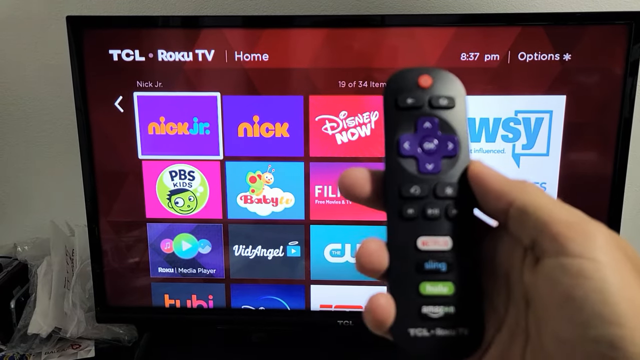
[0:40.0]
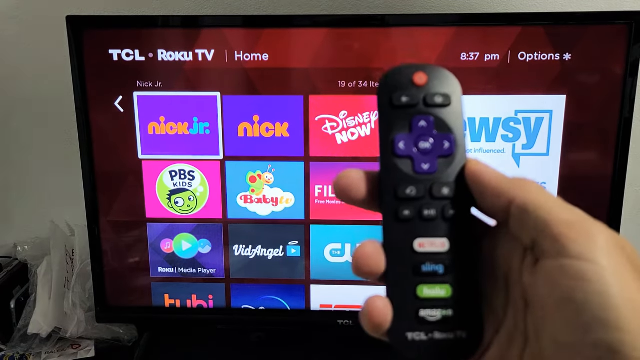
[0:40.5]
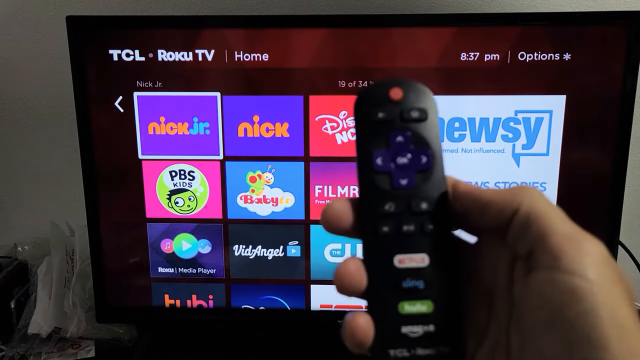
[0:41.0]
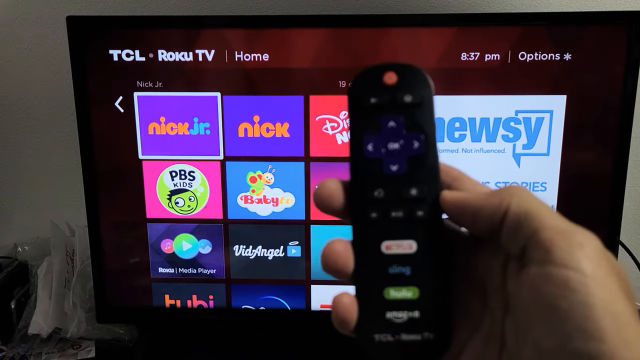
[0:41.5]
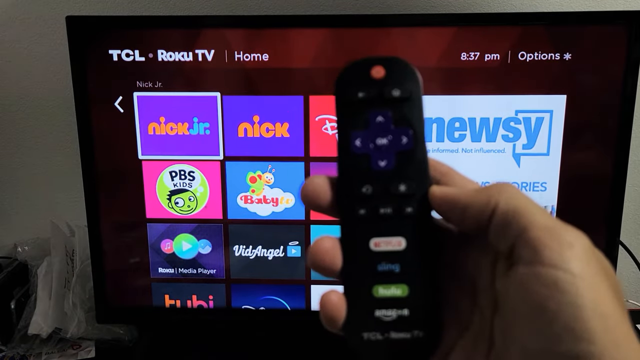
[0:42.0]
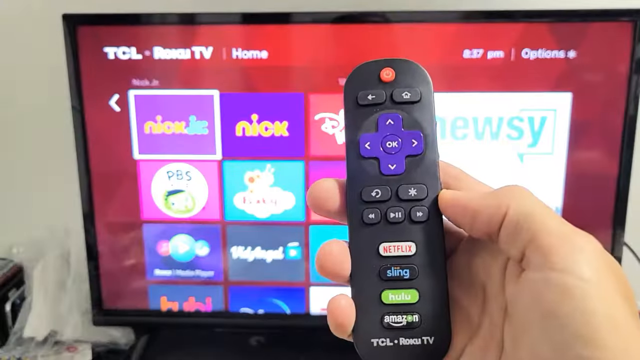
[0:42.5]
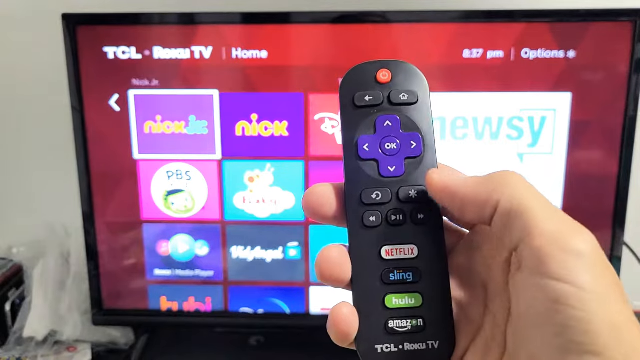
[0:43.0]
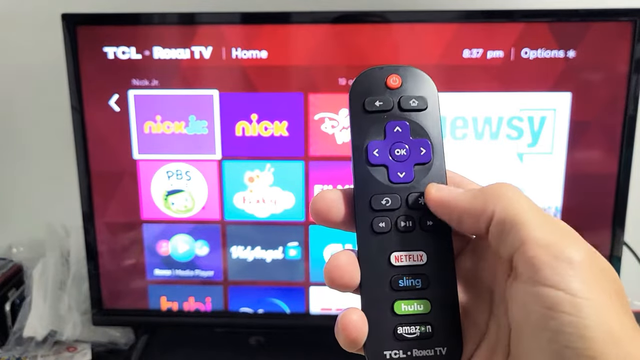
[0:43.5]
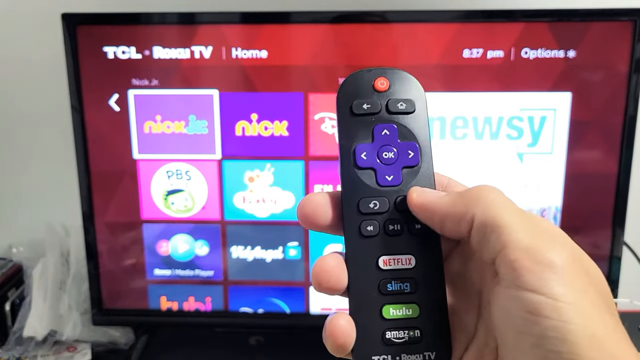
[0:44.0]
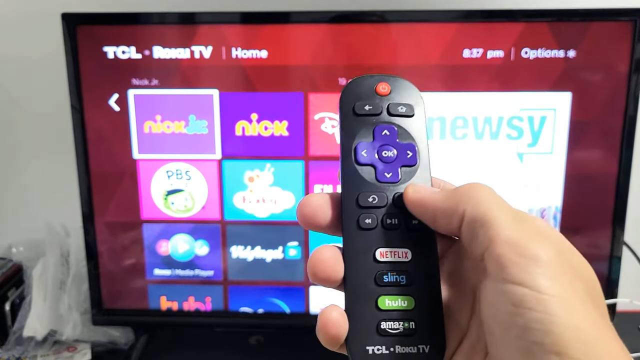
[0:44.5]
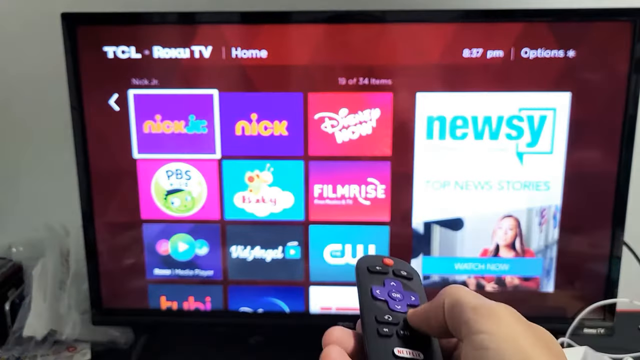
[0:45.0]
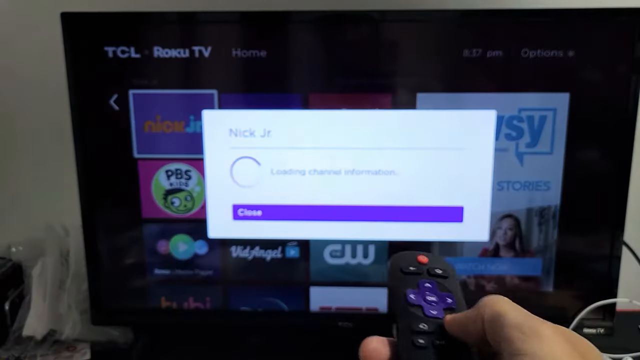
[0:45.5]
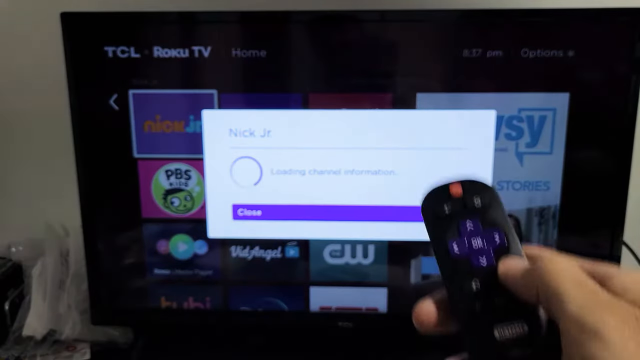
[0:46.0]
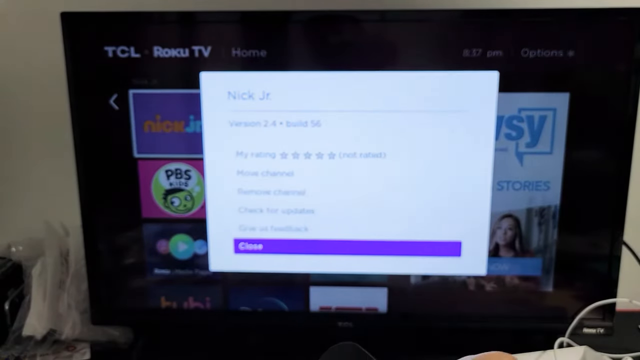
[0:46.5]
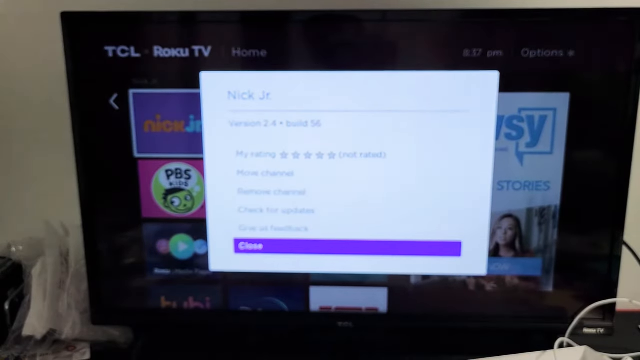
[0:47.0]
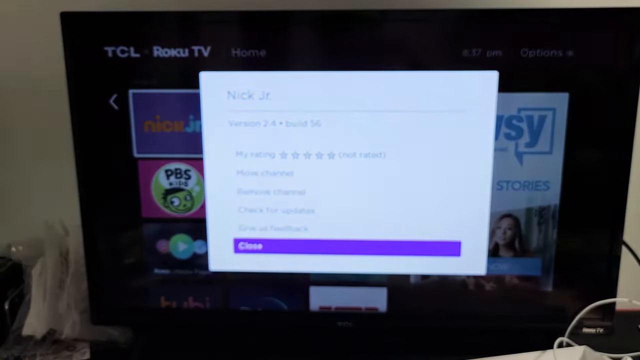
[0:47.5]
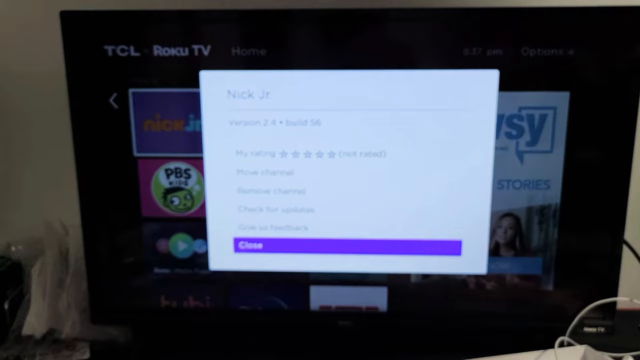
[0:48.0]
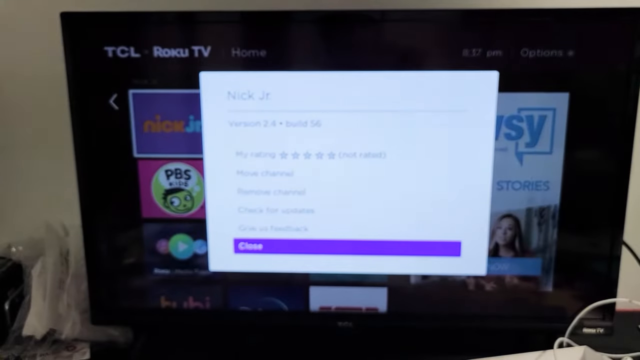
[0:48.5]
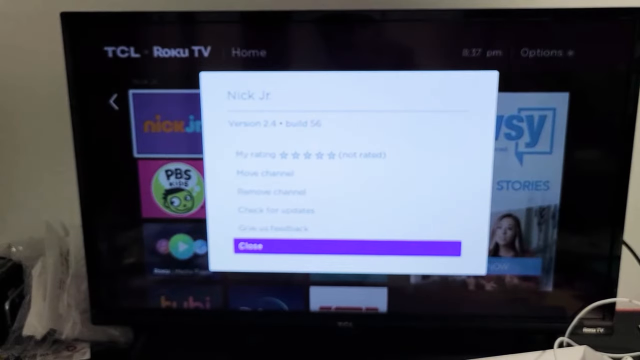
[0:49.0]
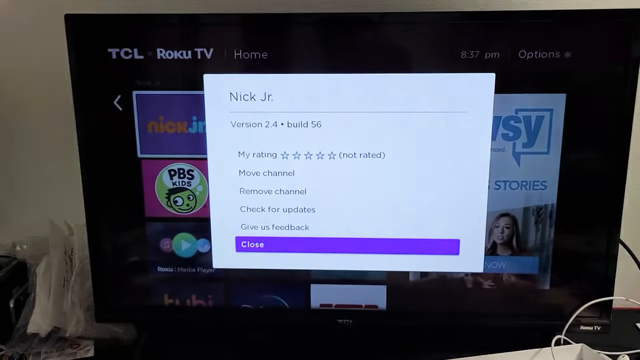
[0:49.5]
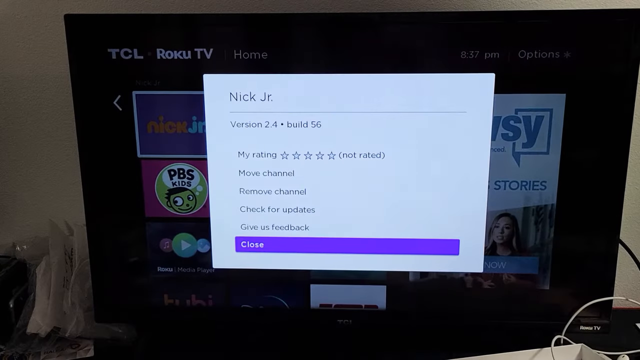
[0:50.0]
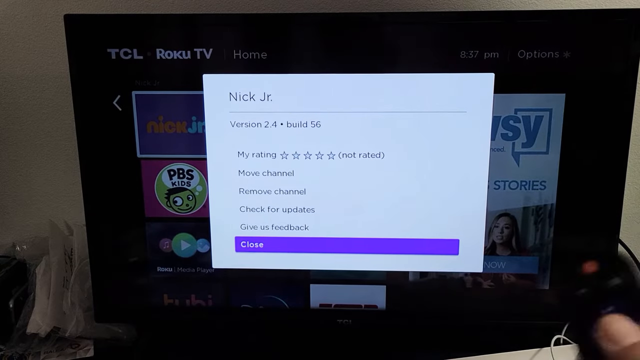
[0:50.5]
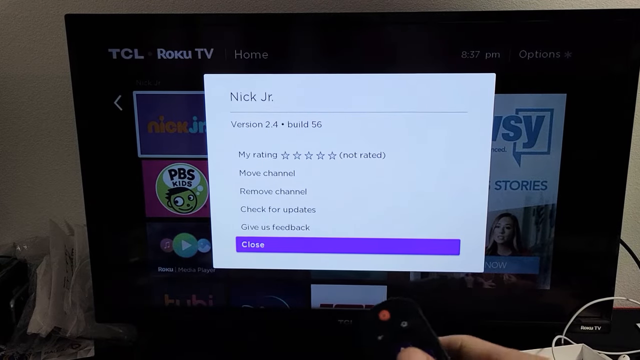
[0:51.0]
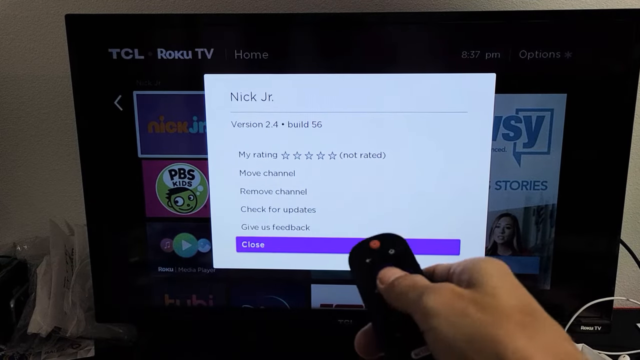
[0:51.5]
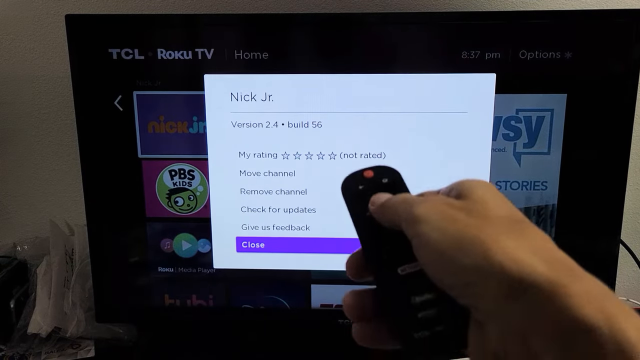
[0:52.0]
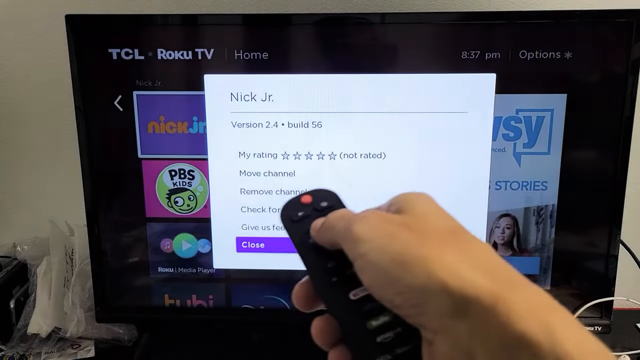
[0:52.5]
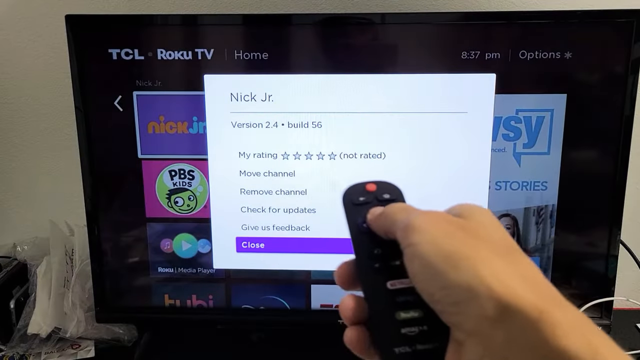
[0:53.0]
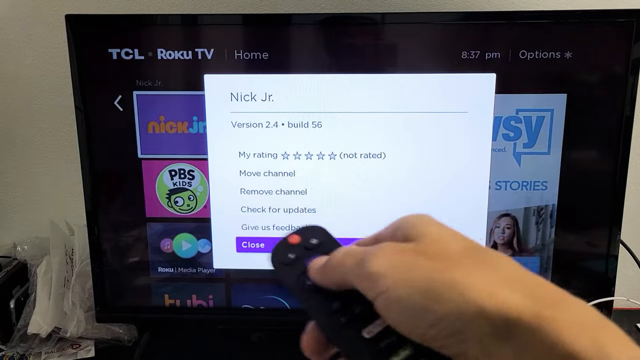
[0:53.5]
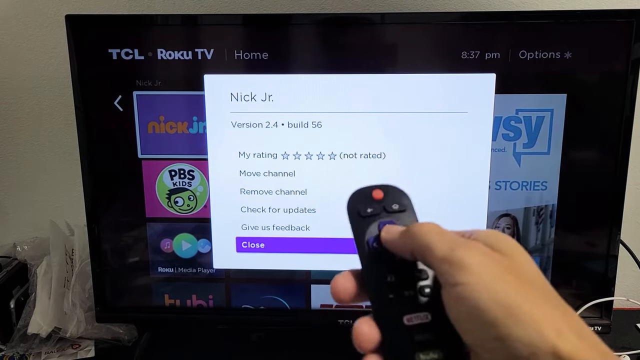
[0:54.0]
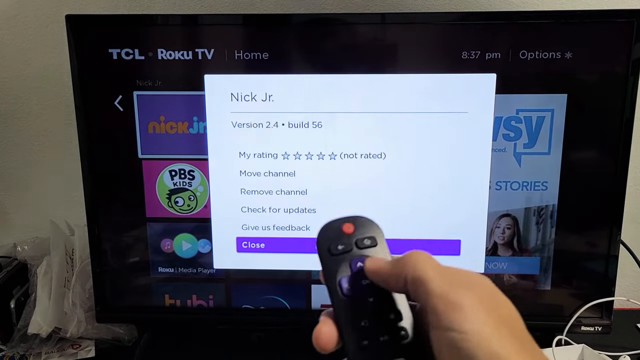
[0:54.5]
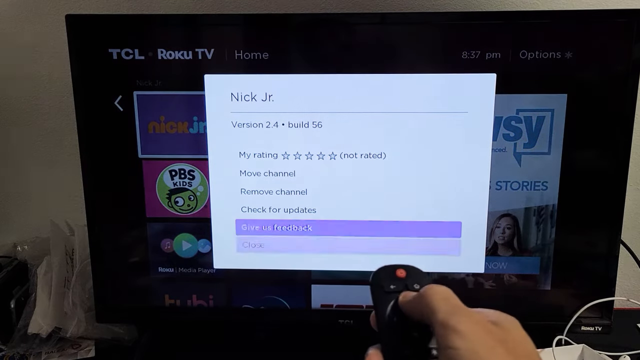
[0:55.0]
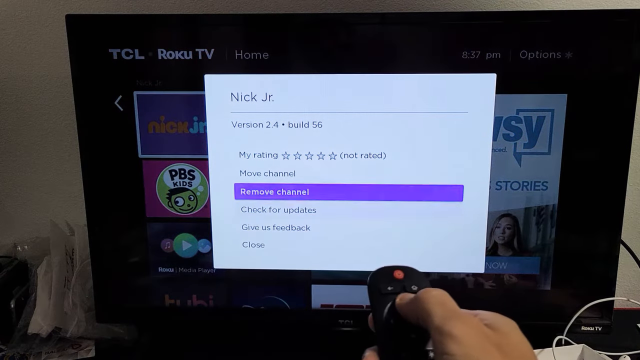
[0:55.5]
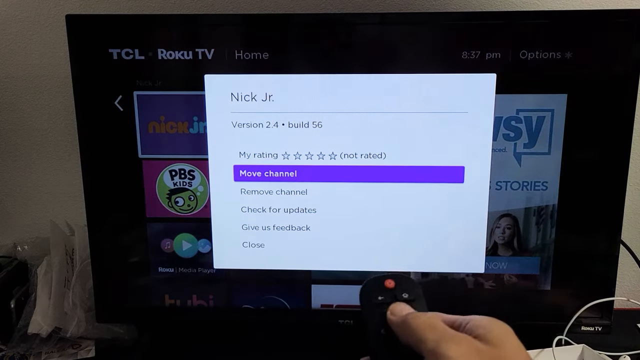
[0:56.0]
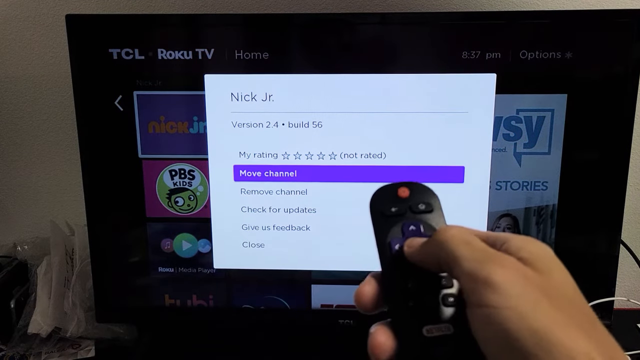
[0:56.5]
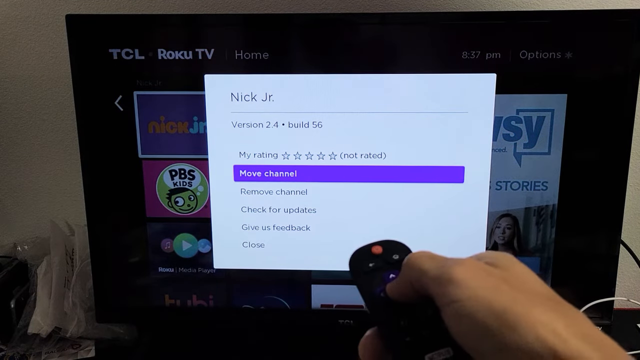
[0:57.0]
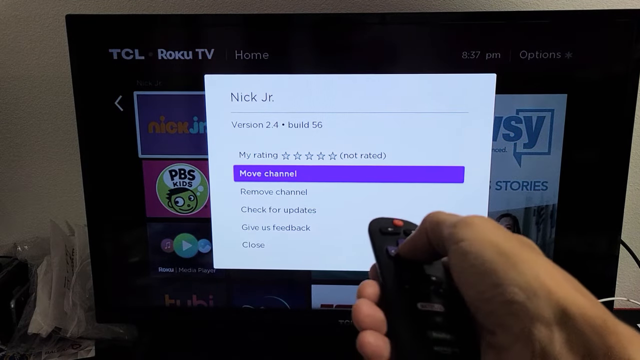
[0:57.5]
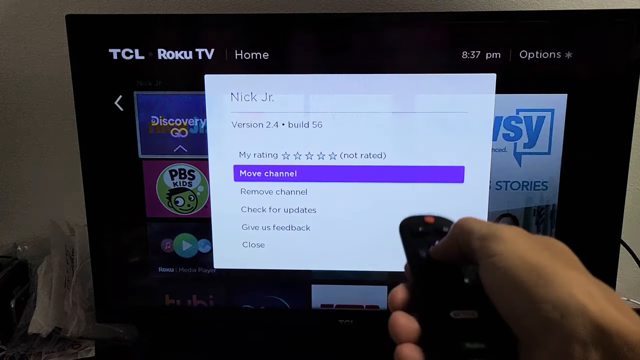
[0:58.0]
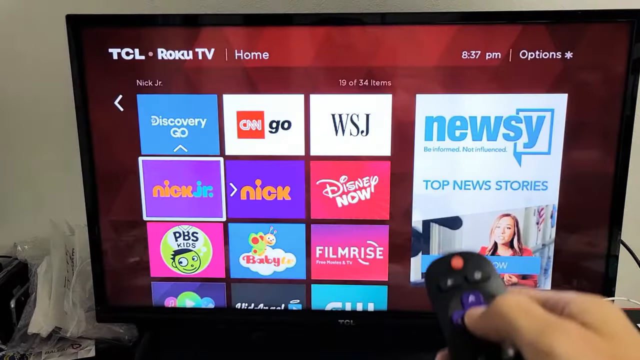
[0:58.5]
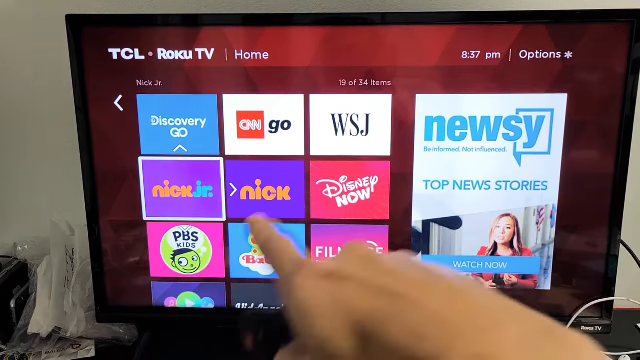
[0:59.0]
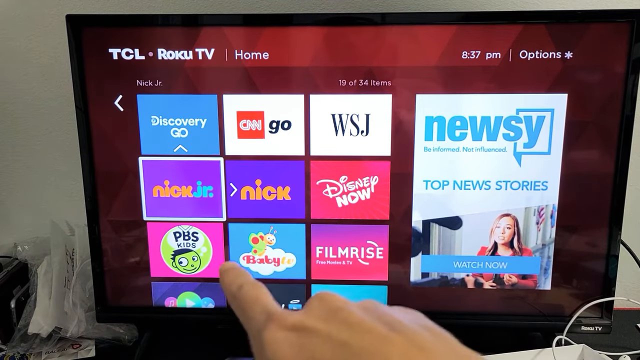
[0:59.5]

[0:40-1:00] At the beginning the background is dark, and the remote, closest in the frame, is out of focus in very poor lighting. Then the lighting and picture quality seemingly correct themselves. Very quickly afterward, a page or pop-up for Nick jr. comes up. "Nick jr." is readable, but the text below it is out of focus and very grainy. The picture quality then becomes completely clear, and the options are readable: give the Nick jr. app a rating, move the channel, remove the channel, check for updates, give feedback, or close. The person selects Move Channel.